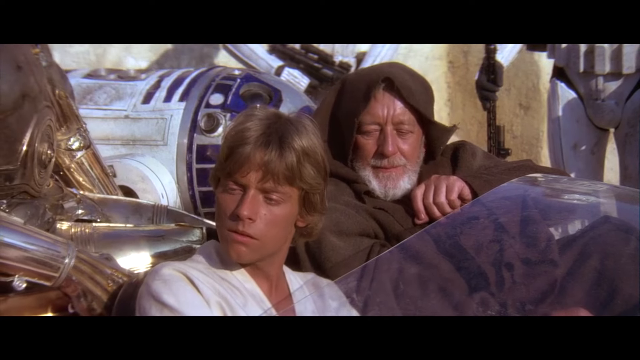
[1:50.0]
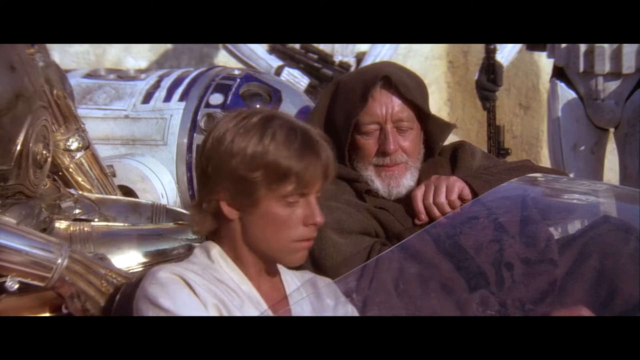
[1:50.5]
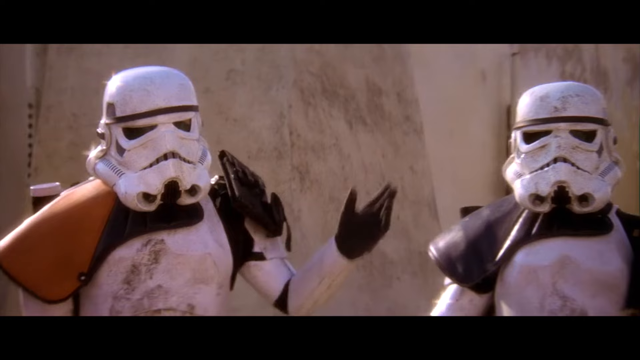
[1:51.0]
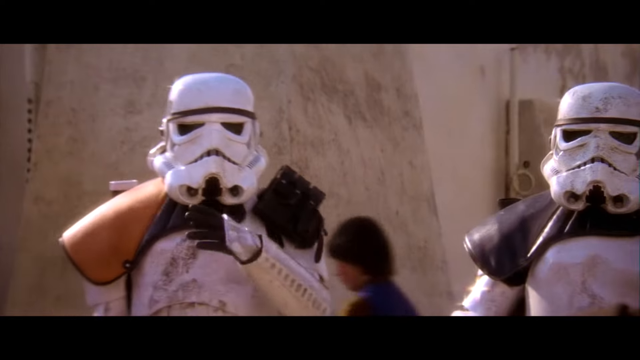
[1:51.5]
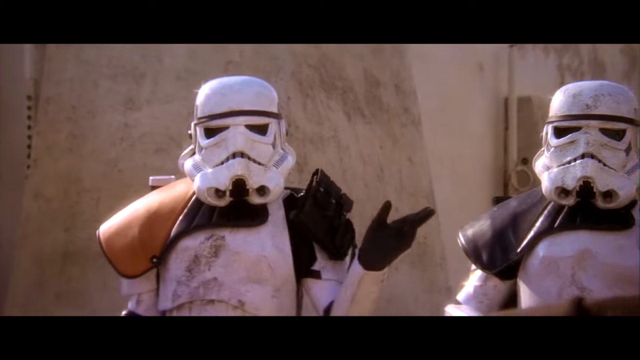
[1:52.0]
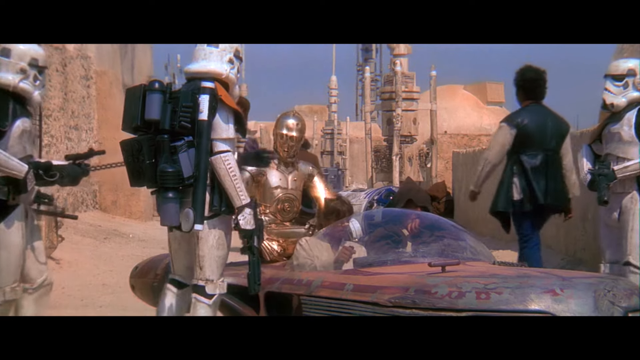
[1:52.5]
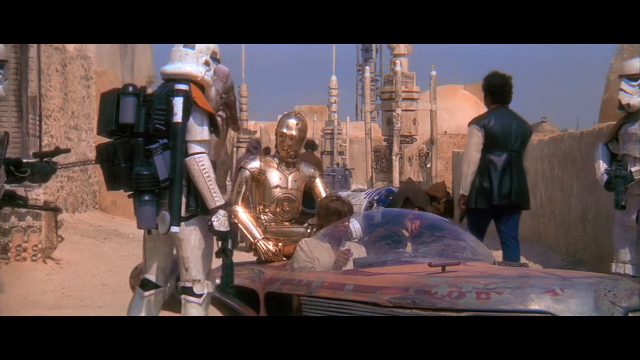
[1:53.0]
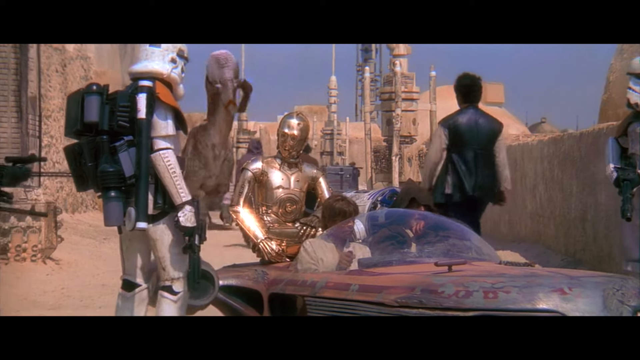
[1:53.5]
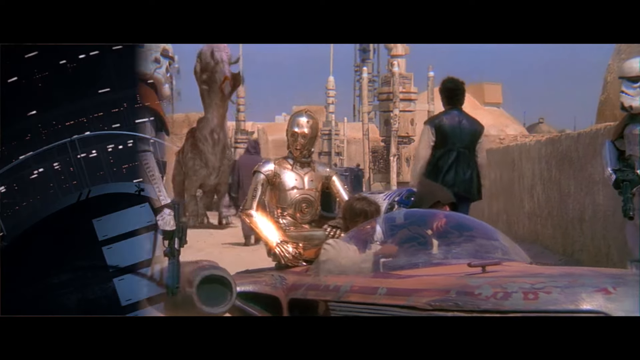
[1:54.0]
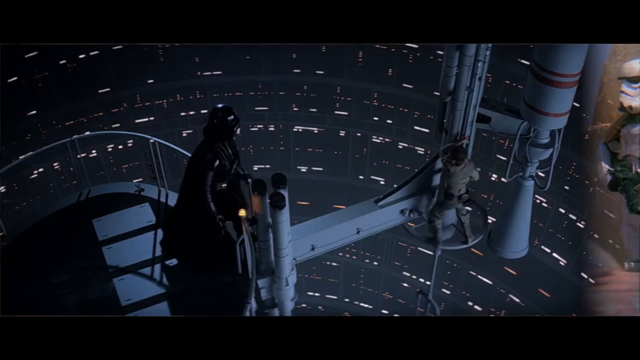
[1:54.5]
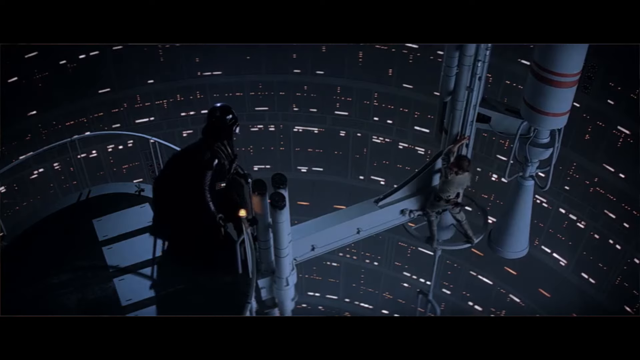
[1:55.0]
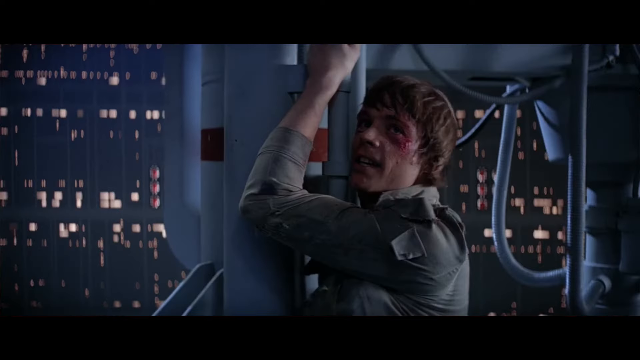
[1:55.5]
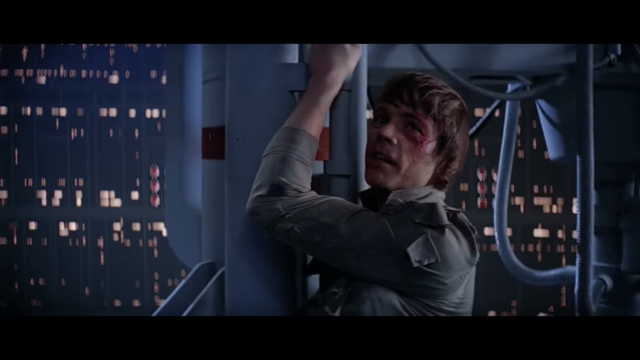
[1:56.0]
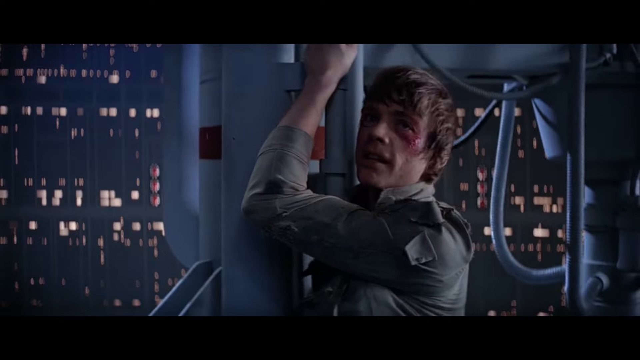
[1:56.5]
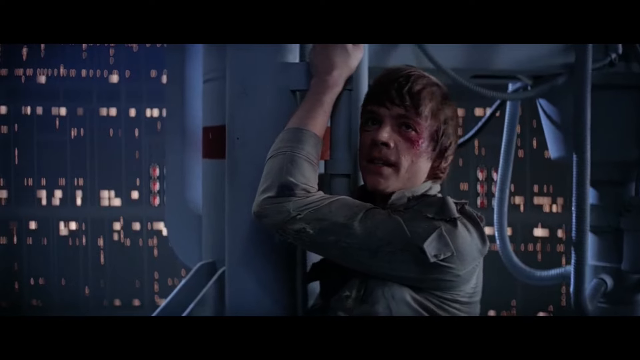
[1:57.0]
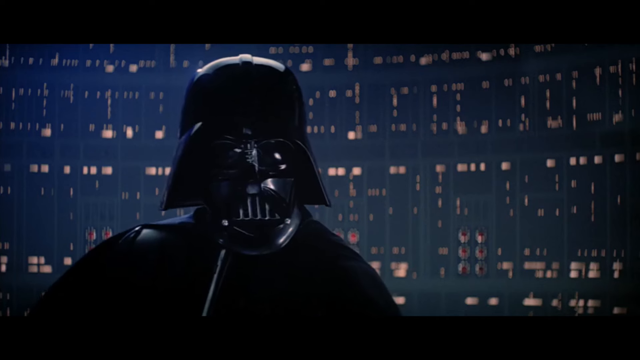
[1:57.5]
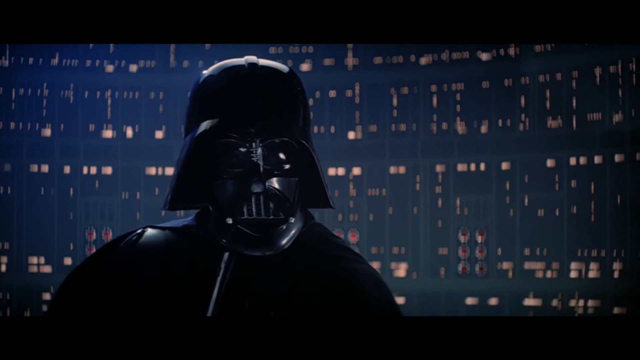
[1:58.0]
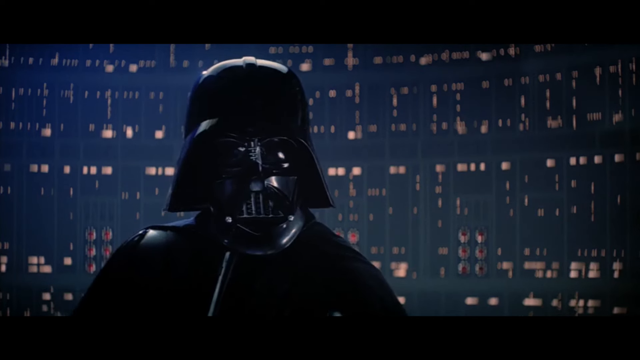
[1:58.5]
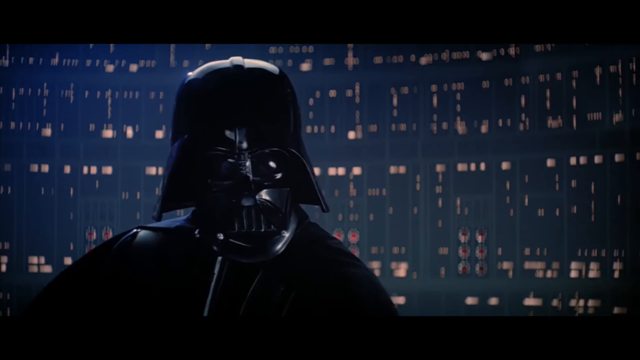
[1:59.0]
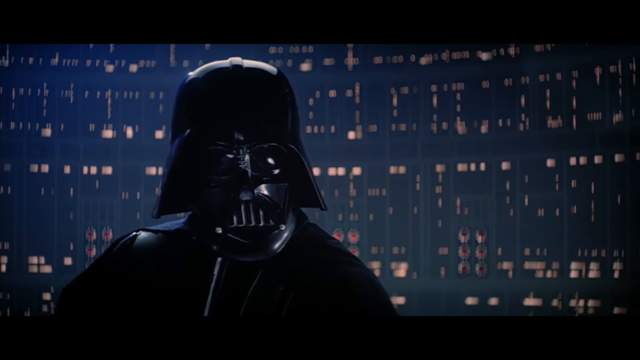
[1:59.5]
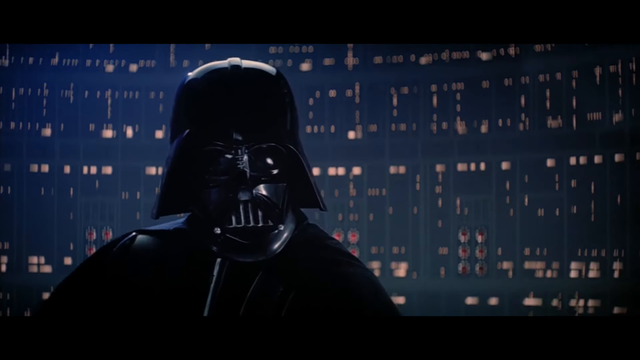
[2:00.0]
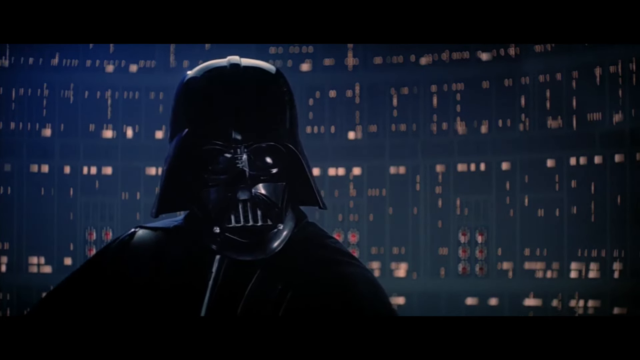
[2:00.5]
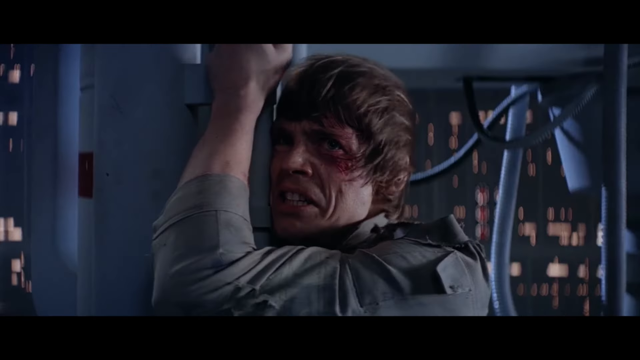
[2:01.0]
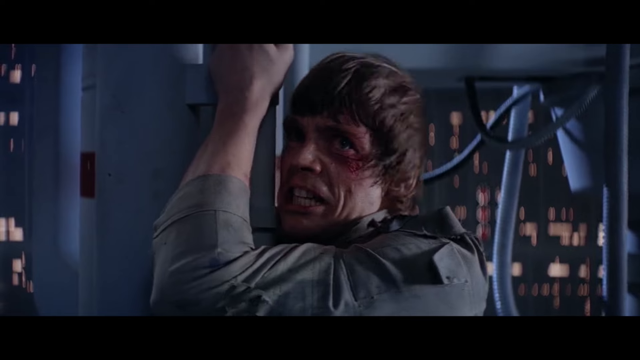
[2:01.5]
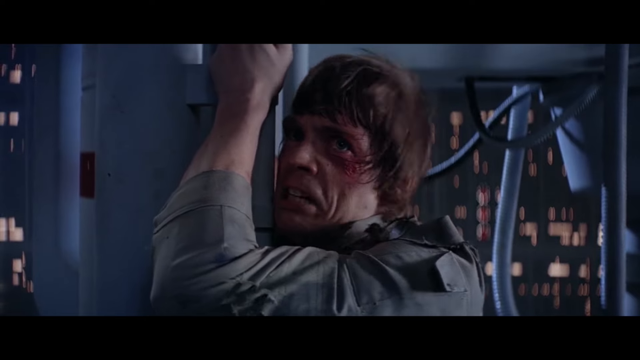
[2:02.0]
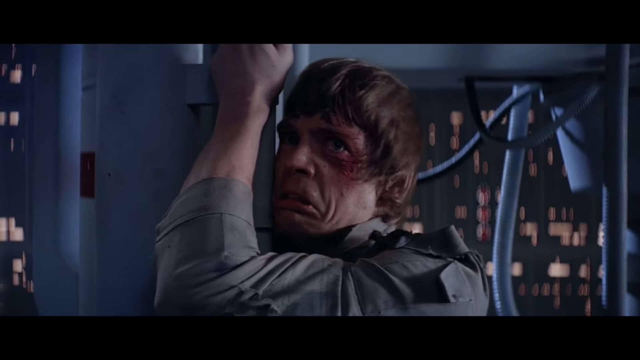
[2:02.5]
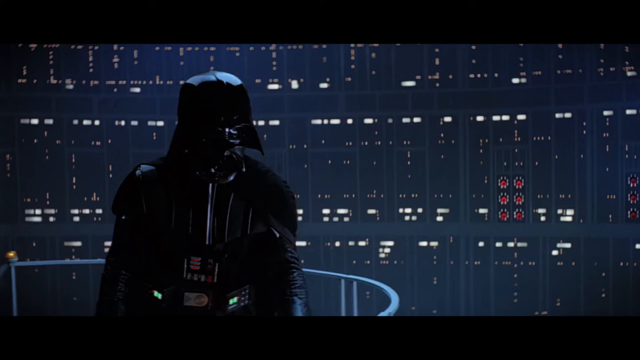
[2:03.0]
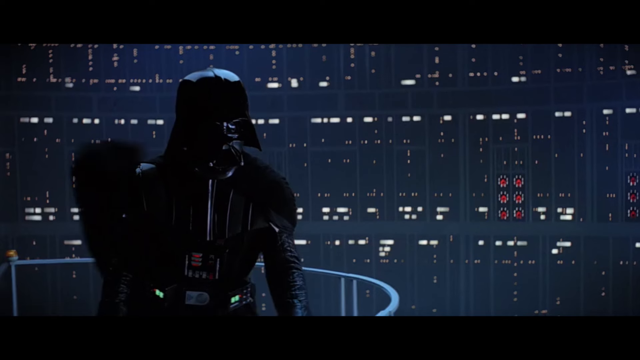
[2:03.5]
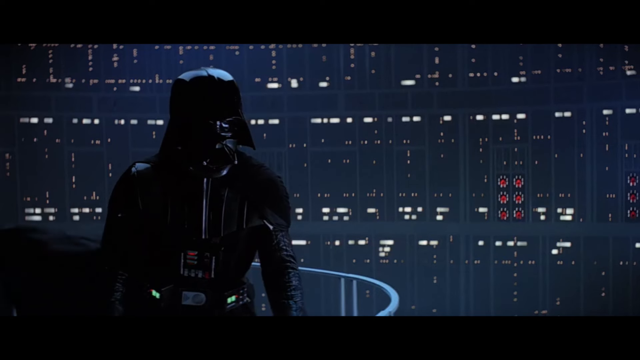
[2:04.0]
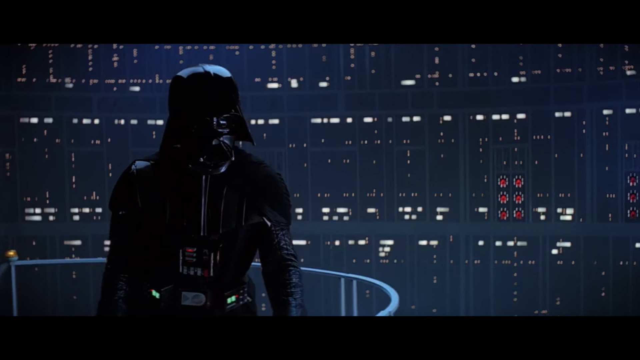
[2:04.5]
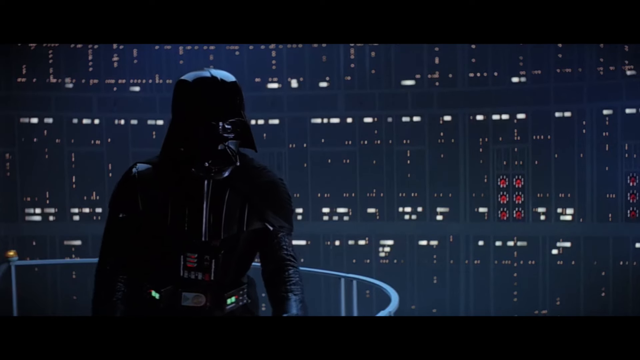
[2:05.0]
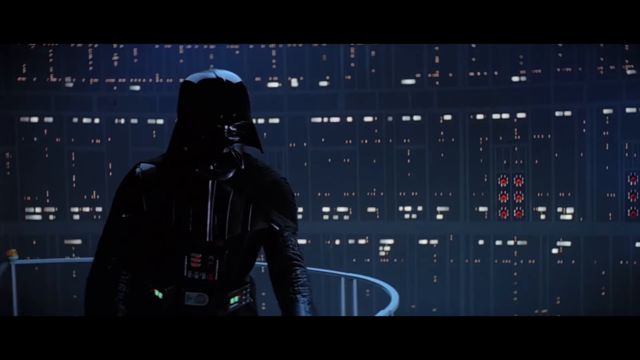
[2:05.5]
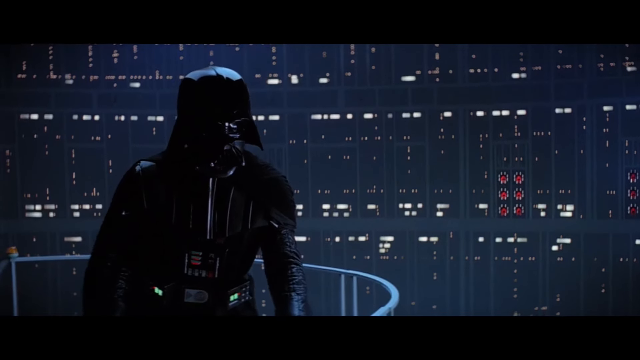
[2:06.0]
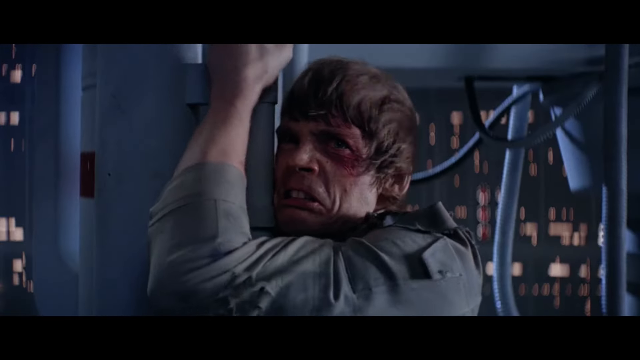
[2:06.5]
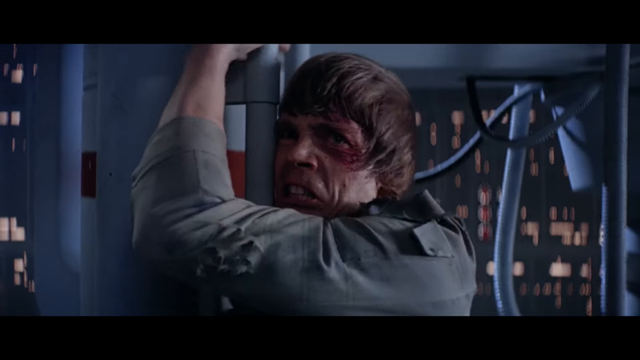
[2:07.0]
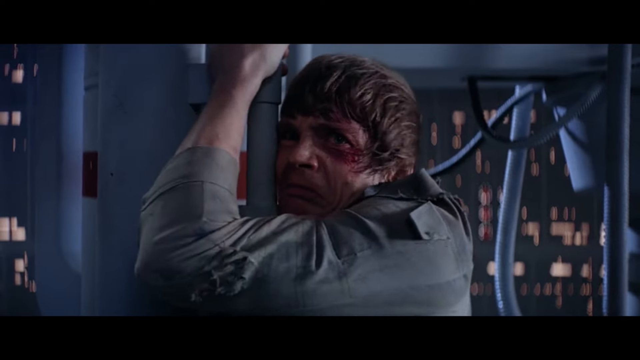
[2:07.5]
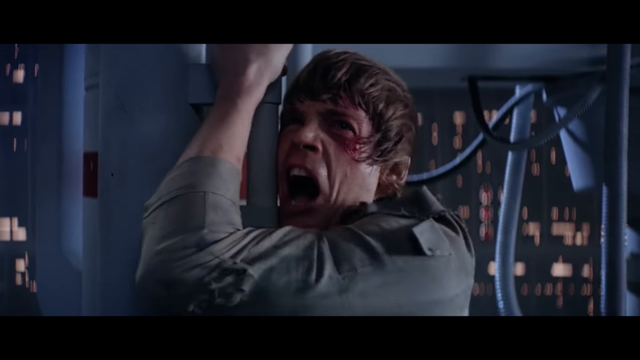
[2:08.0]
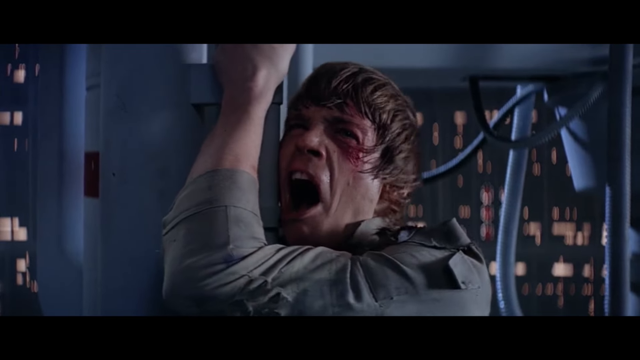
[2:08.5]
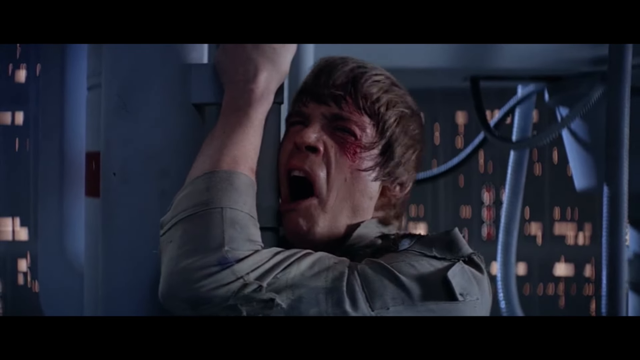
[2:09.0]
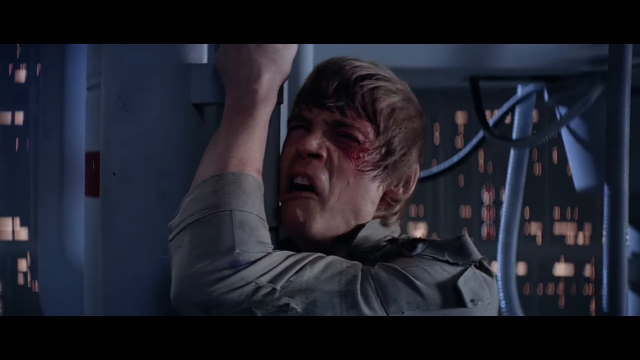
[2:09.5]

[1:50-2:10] More disconnected cutout scenes follow. A creature that looks like a monkey appears, along with other characters. Some men in what looks like a military zone have a conversation, and they move in a sort of spaceship car, probably heading somewhere. The video returns to the fight scene, where an unidentified man is screaming.